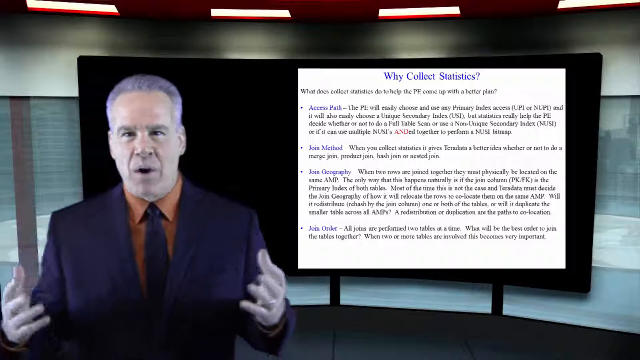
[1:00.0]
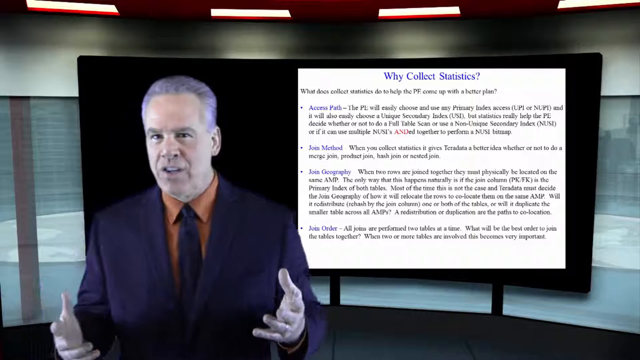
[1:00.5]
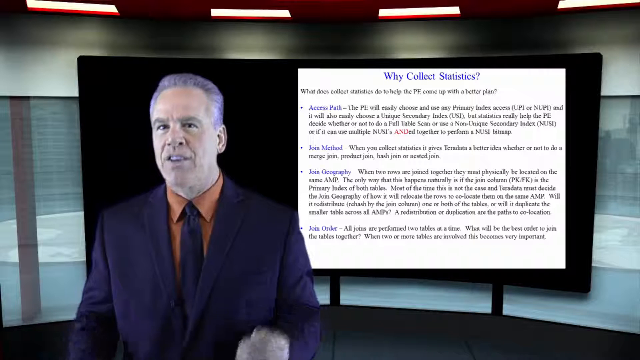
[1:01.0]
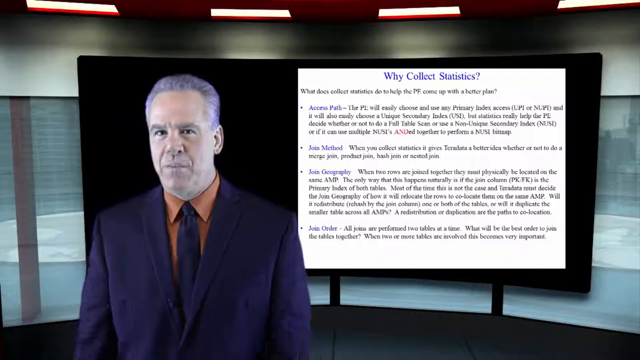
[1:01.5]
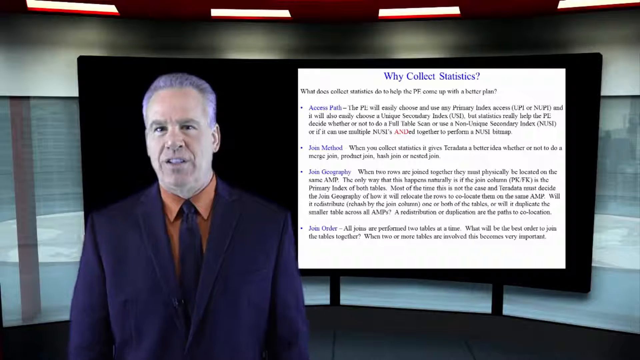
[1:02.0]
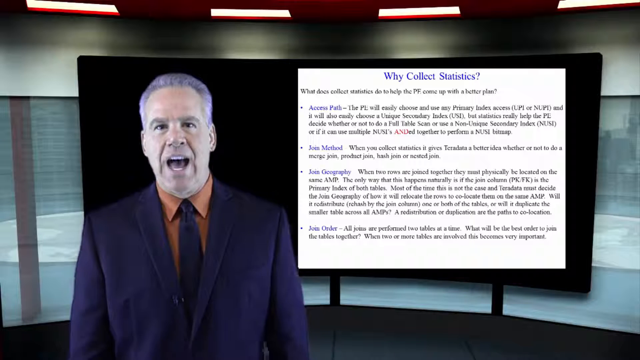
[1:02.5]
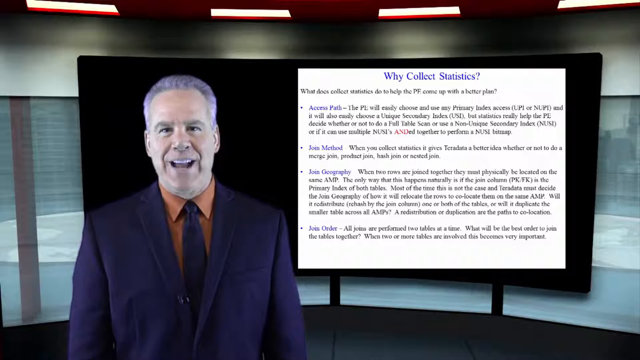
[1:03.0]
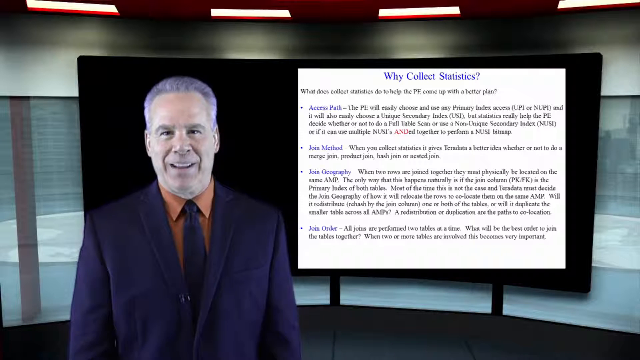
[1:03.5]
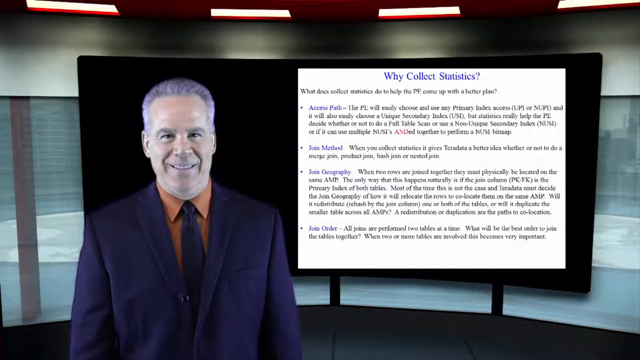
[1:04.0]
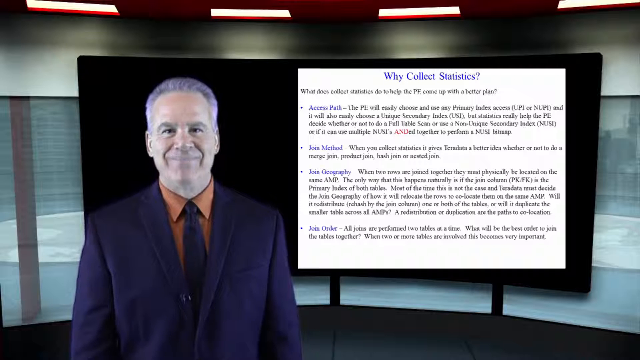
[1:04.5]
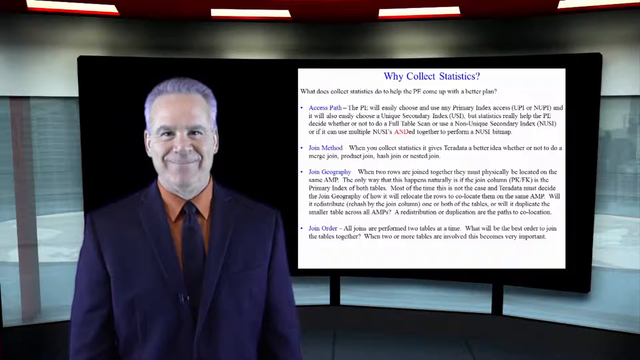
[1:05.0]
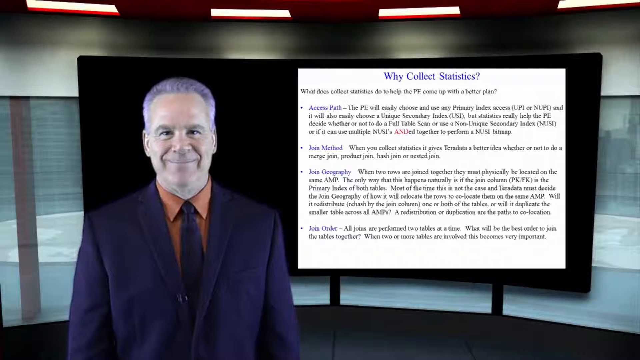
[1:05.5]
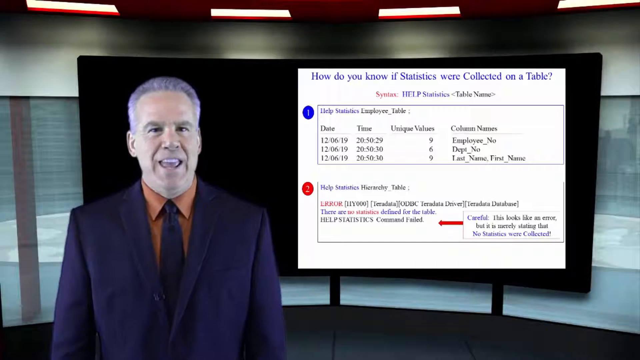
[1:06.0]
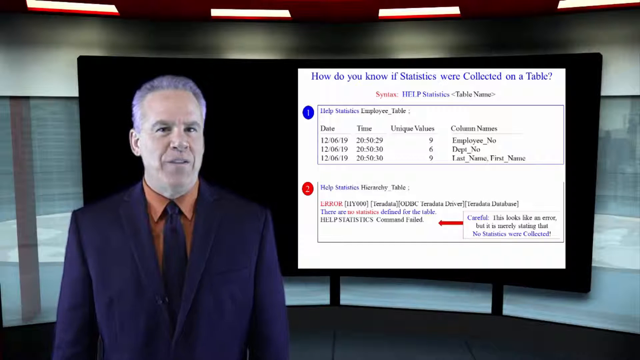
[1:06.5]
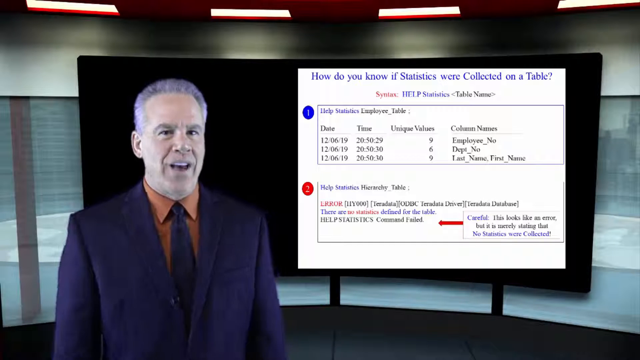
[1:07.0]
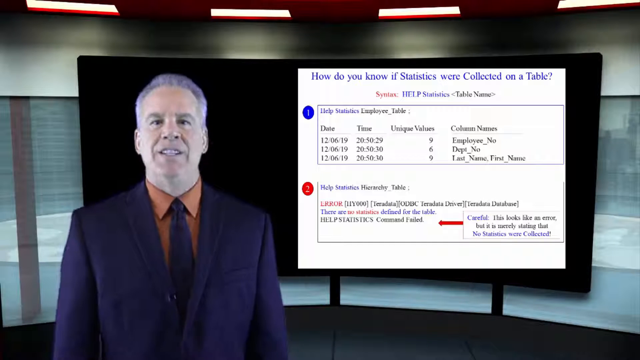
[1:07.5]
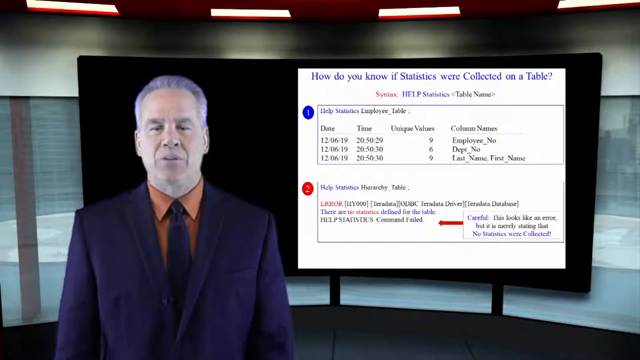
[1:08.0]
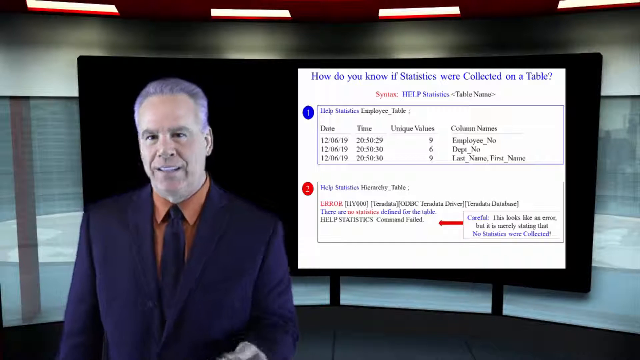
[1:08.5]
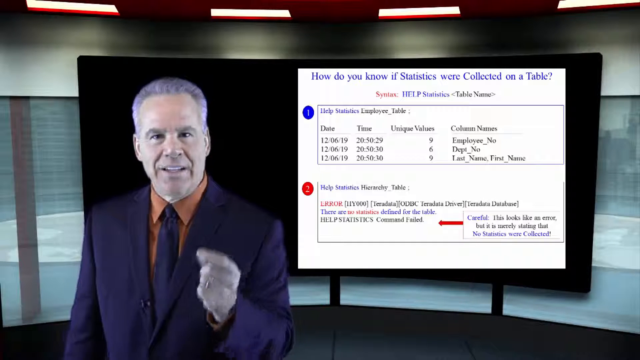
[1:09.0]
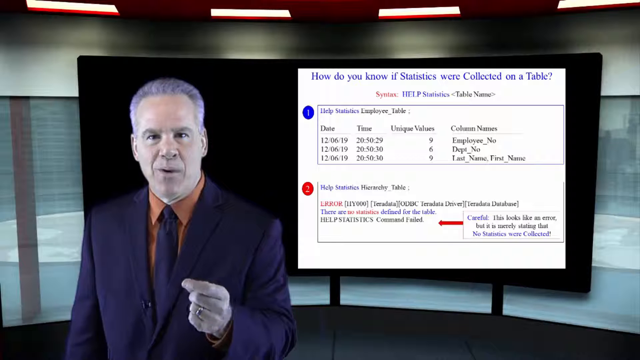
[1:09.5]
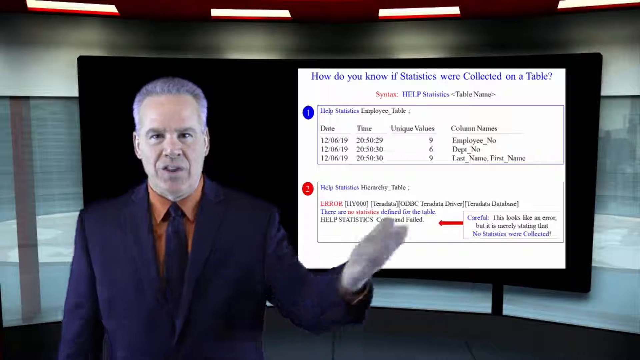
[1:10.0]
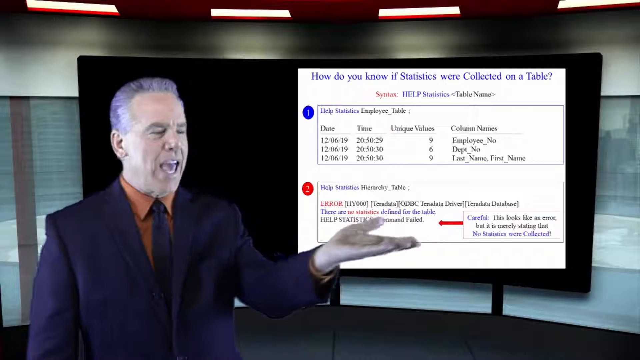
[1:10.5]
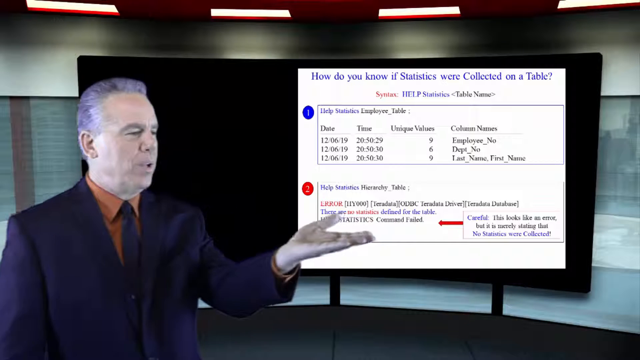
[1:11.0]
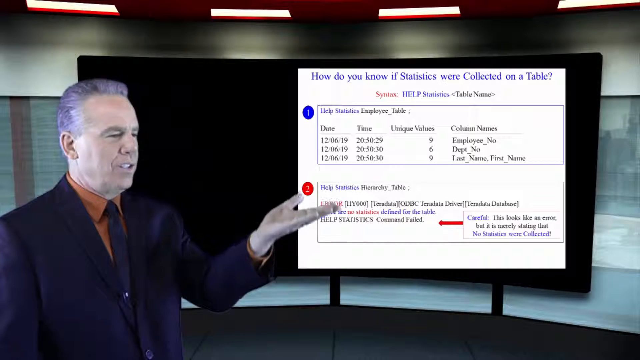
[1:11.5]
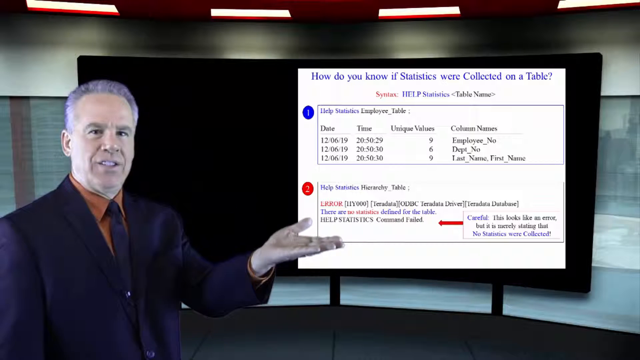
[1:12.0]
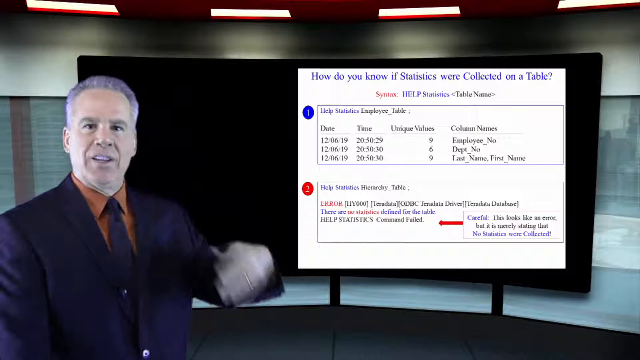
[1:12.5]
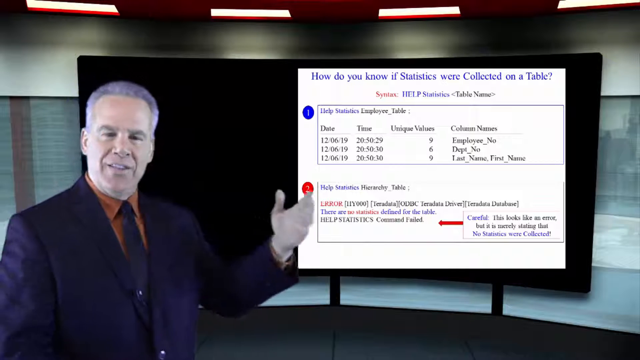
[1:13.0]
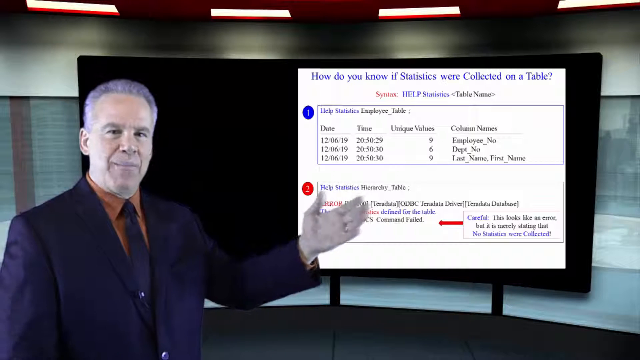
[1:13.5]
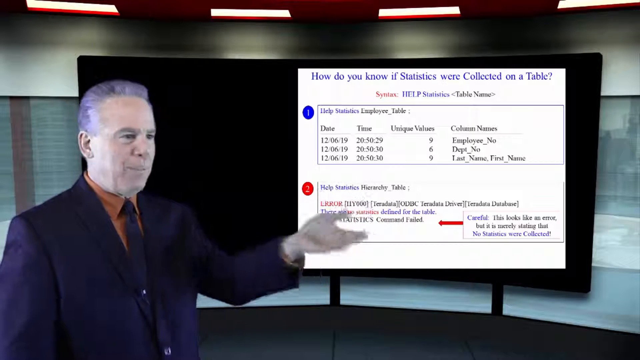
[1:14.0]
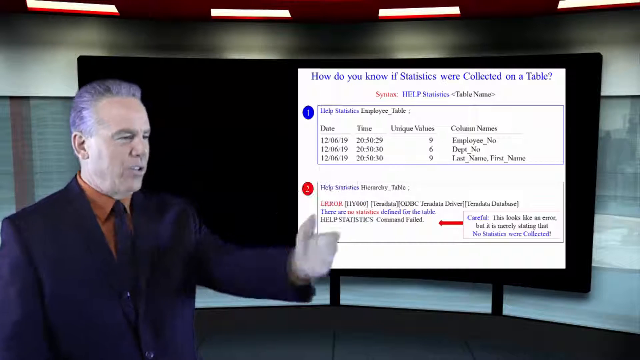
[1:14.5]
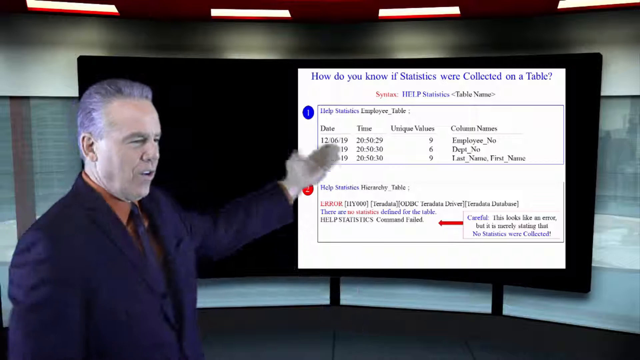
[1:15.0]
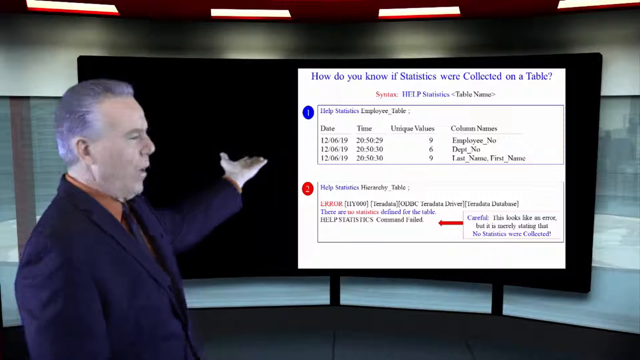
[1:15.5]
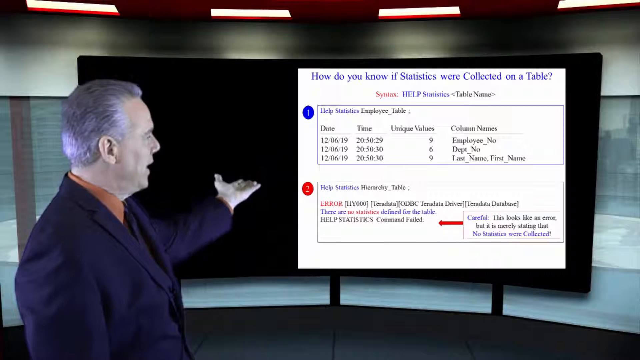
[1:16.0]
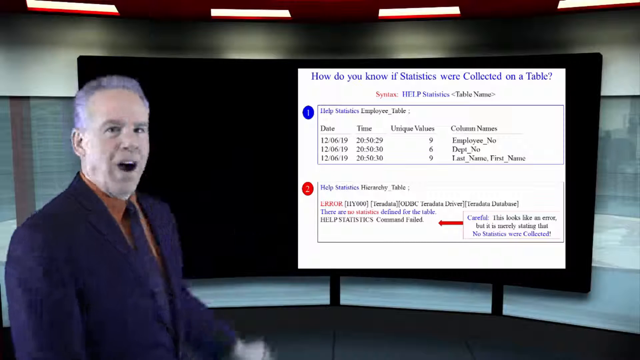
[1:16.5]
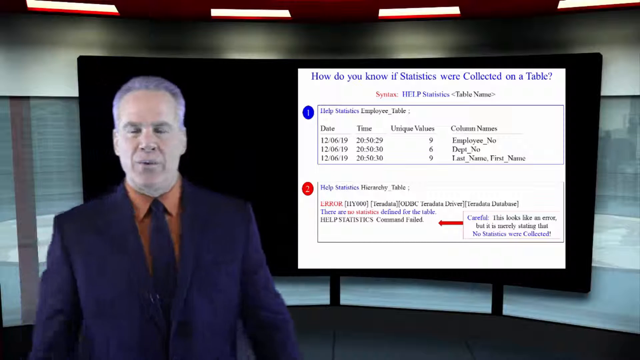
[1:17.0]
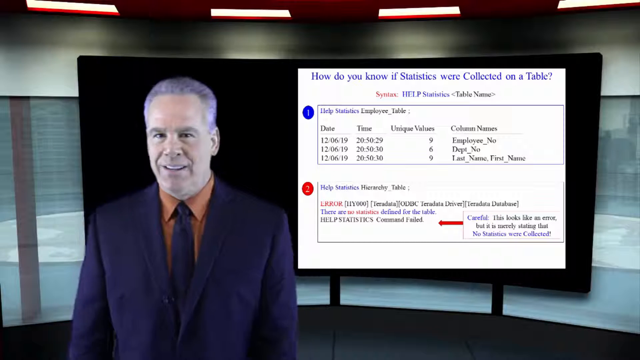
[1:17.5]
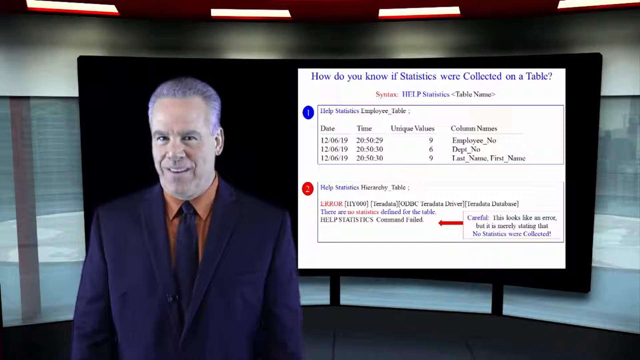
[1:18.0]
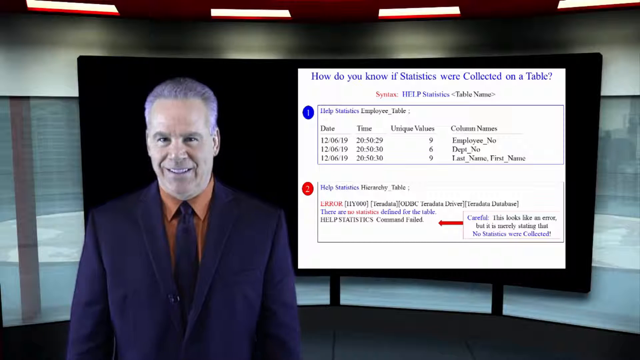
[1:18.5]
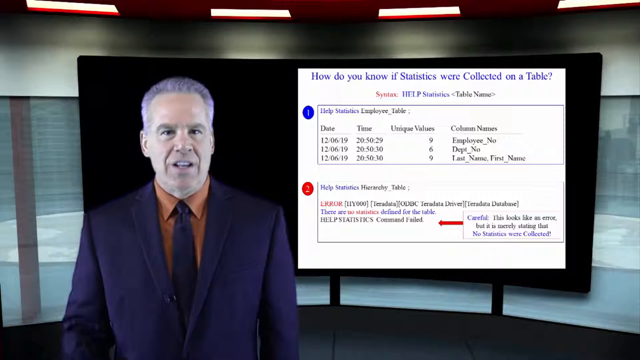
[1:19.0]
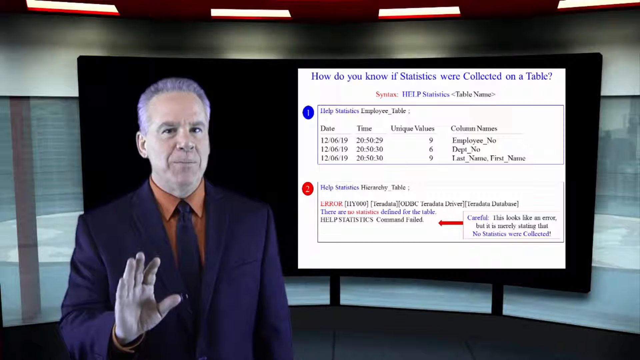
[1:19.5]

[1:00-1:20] A man stands with a screen over his left shoulder showing a chart. At the top the screen says "how do you know if statistics was collected on a task." Beneath that title is a chart labeled with a number 1 in a blue circle, and below it more text labeled with a number 2 in a red circle. The type is too small to read in detail, but it looks like a combination of numbers and words; at one point columns for date, time, unique values and column names are visible. The man appears to be elaborating on the screen's contents, talking with his hands and appearing quite animated, as though speaking directly to the viewer.